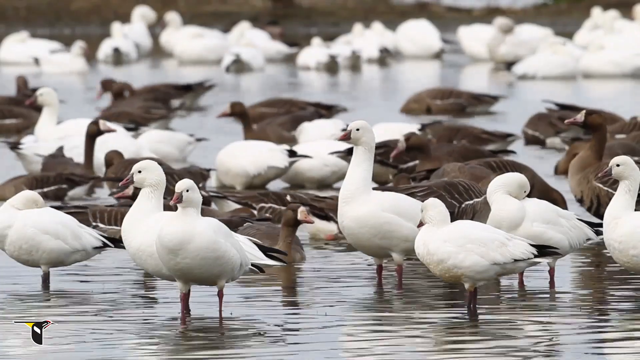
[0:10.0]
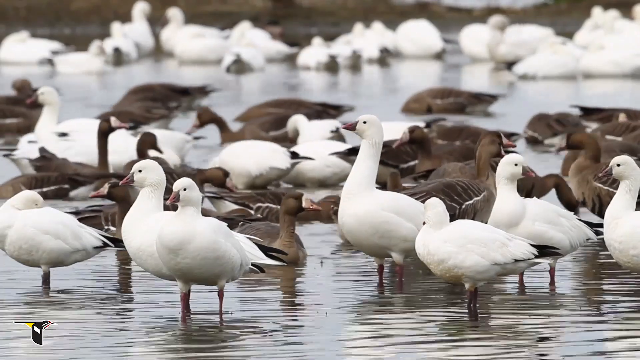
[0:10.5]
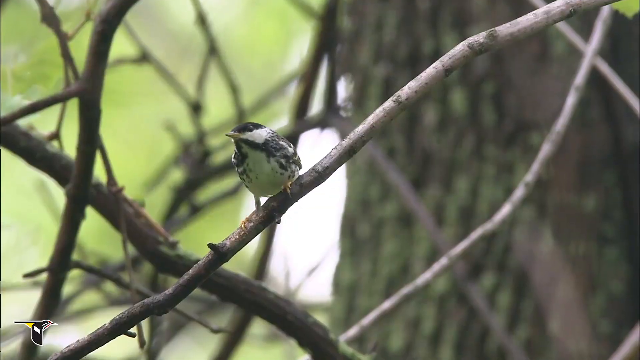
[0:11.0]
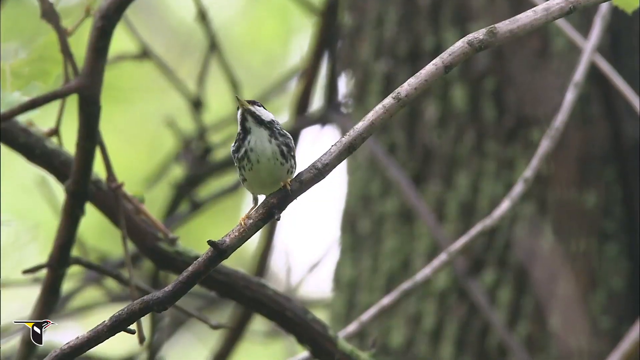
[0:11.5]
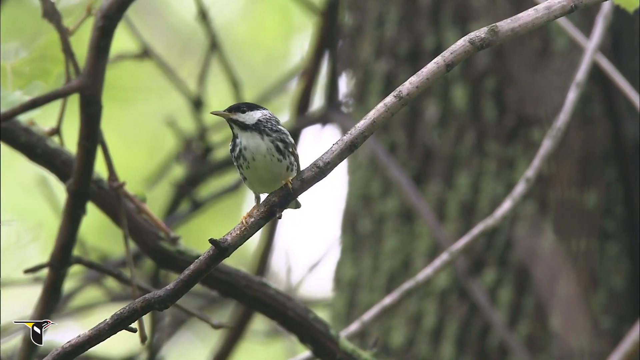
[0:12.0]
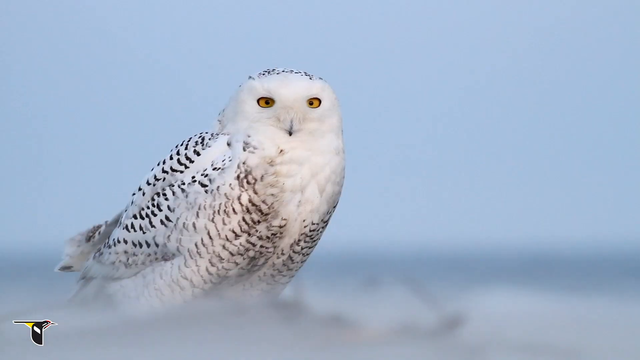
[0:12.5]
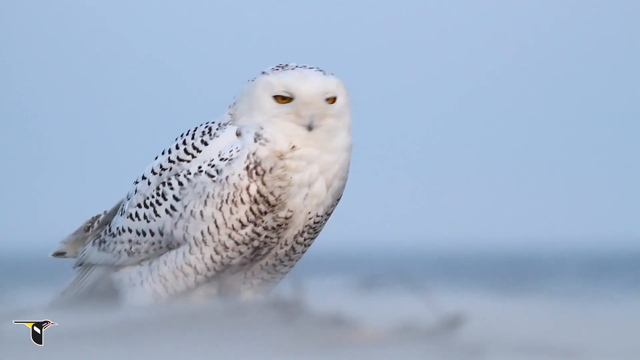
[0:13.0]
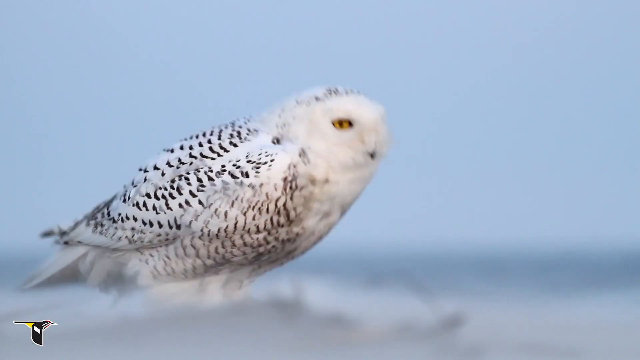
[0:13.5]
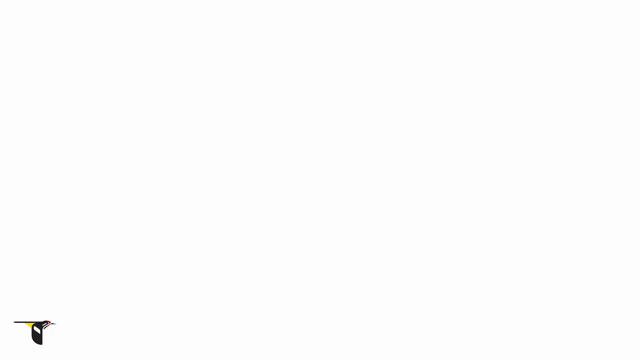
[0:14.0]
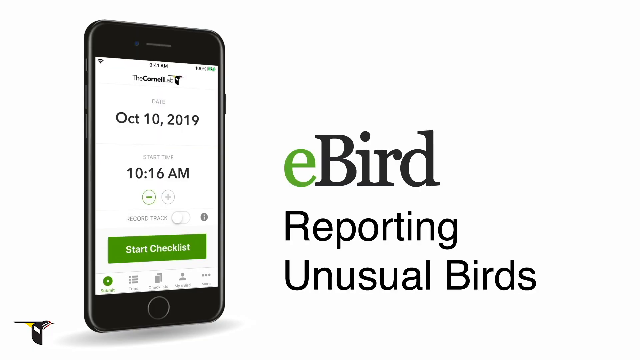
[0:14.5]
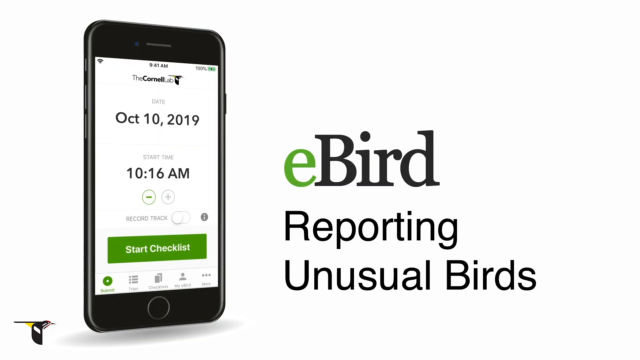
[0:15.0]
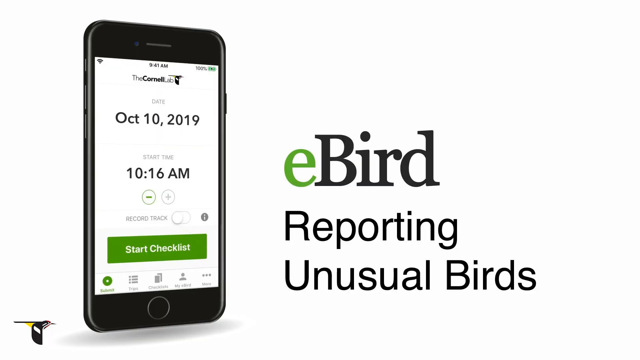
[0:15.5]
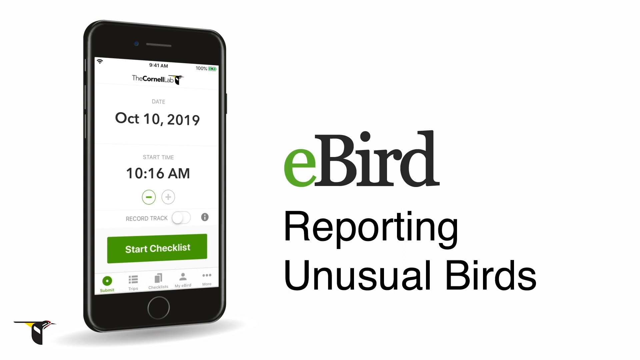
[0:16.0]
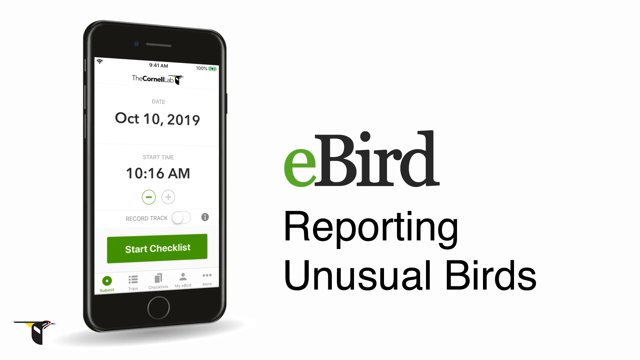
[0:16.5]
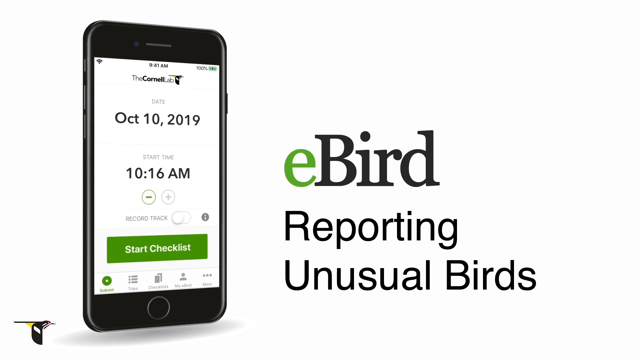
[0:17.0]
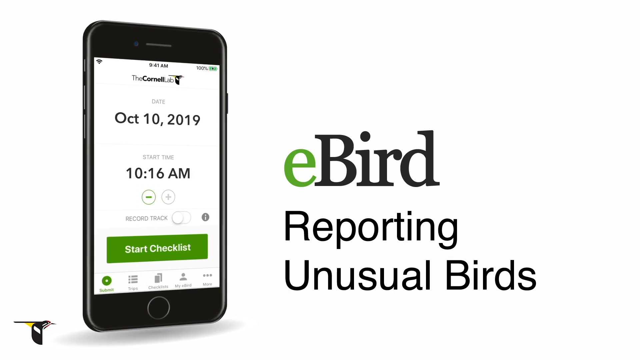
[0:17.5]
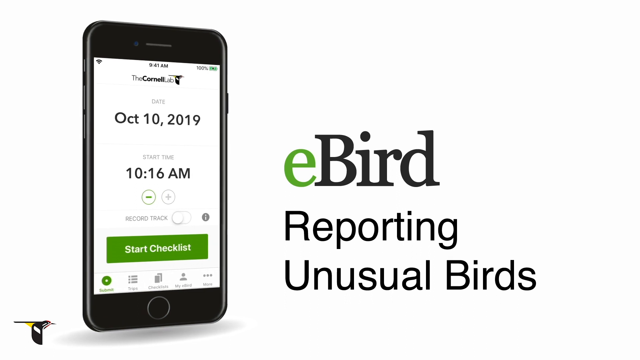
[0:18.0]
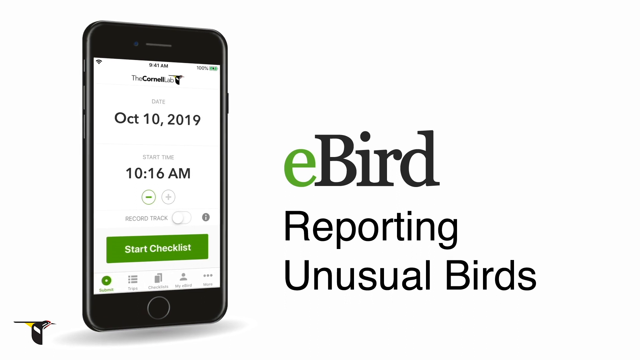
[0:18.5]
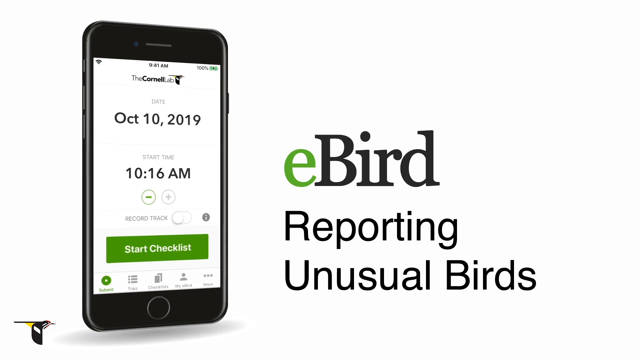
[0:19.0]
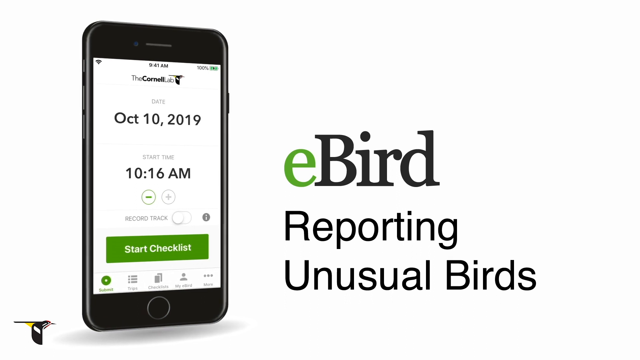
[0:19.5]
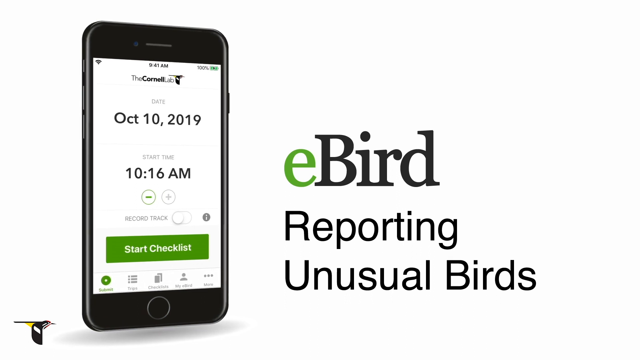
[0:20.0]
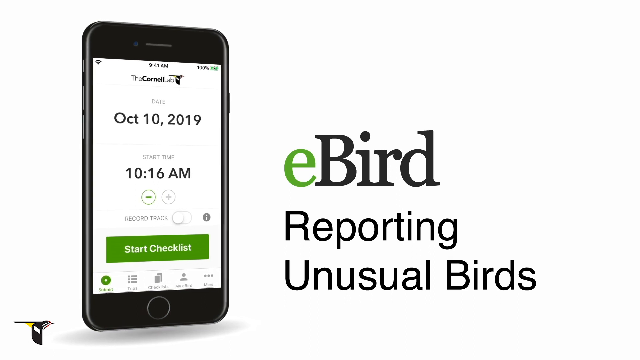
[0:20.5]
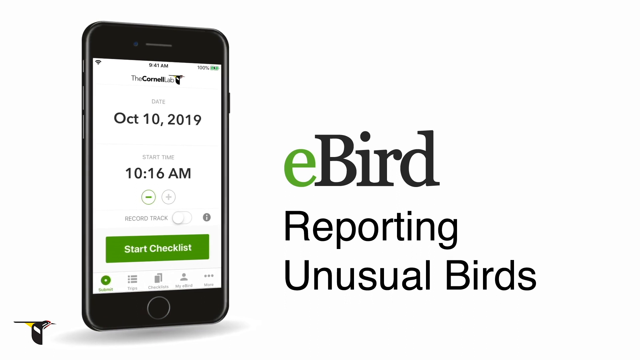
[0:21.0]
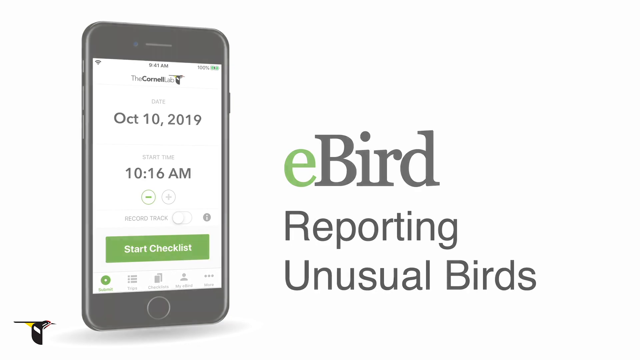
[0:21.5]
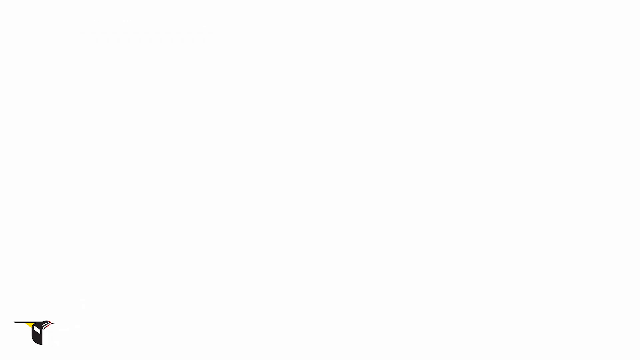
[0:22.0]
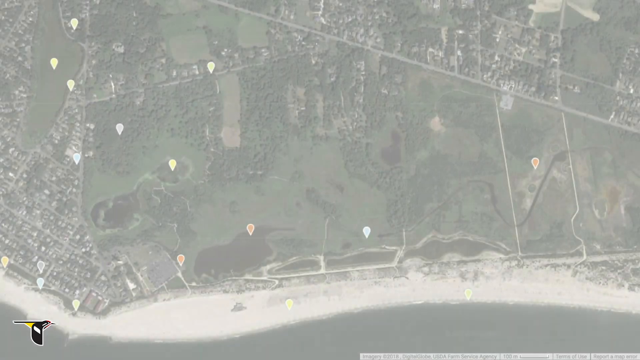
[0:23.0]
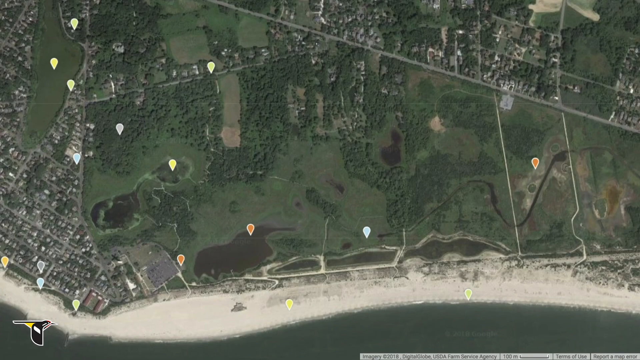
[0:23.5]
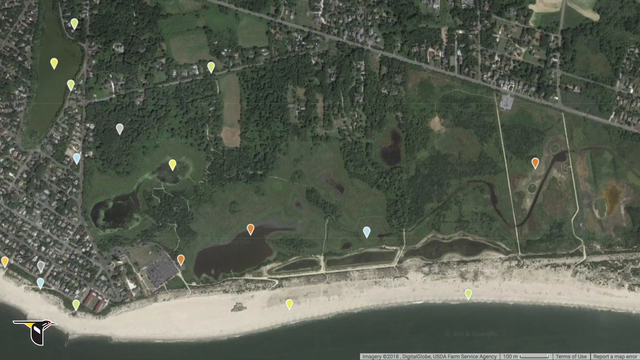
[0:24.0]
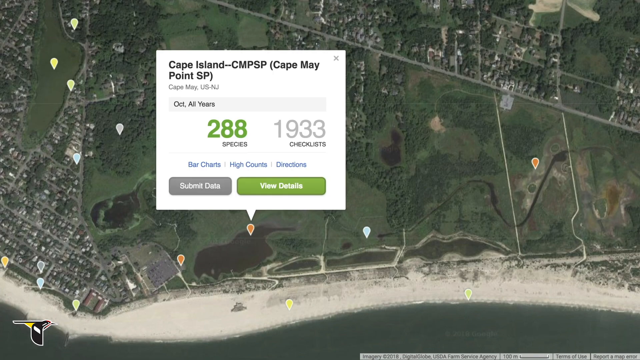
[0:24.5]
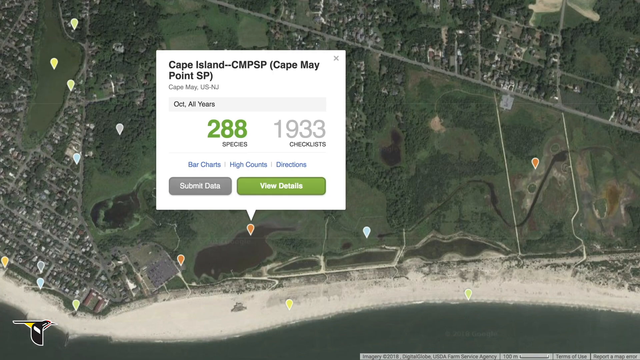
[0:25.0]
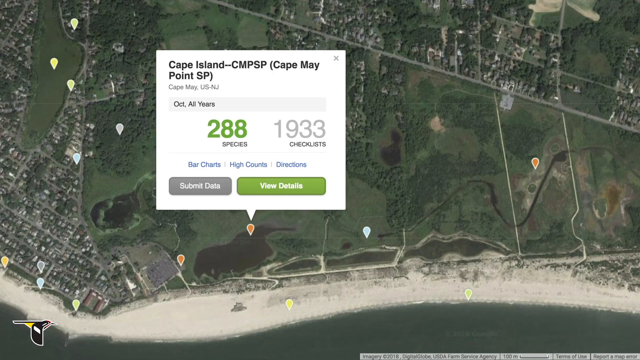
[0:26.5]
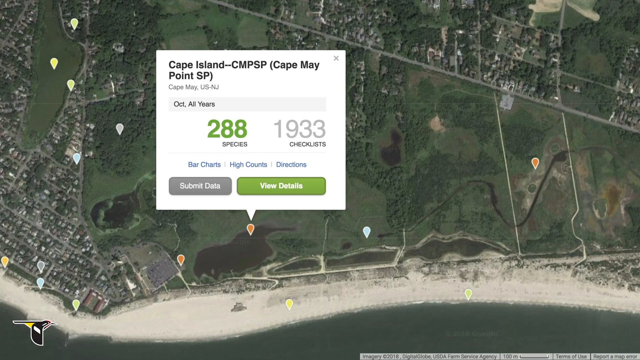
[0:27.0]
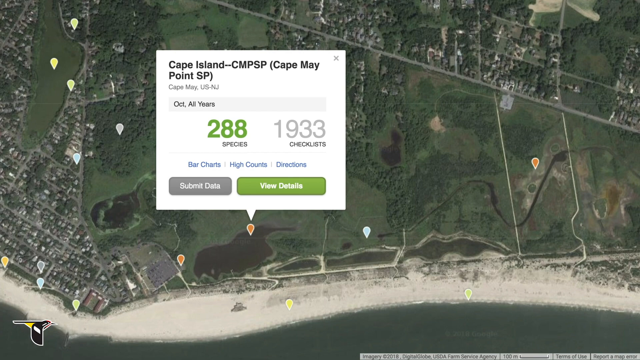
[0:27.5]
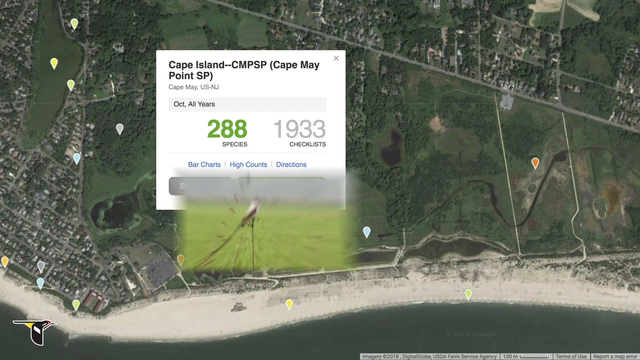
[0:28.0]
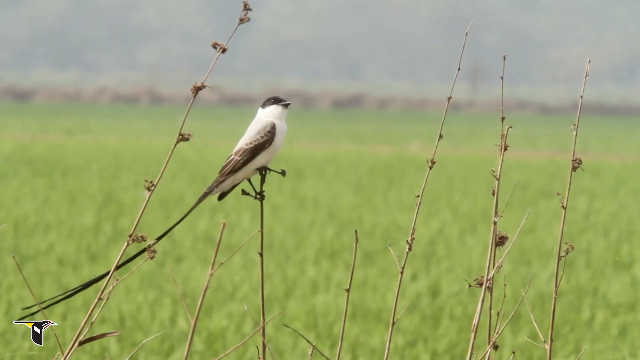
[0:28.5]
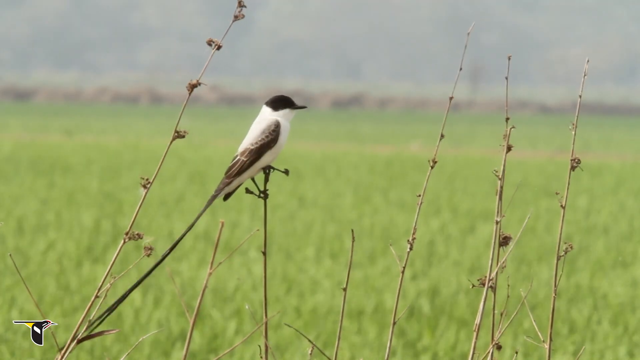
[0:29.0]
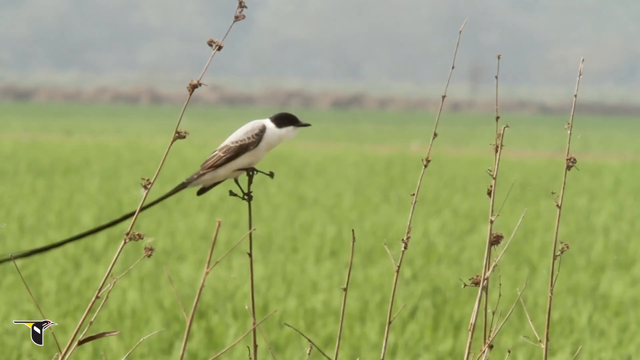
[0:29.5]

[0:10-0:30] Birds of different types appear. First, several dozen white and brown birds that appear to be ducks or geese stand in the water along a waterway. Then a small bird with a white breast and beak and black markings is on a branch in a forested area. Next is an owl, possibly a snowy owl, very white with black markings on its feathers and intense yellow eyes, apparently in a polar scene; it gets up and flies. A screen then advertises an app with the text "eBird reporting unusual birds". It appears to be a mobile app, apparently part of the Cornell lab, and the screen shows a date and time and says "start checklist". An overhead map view follows, indicating species and checklists from a certain area on the map. The video then cuts to a white bird with brown wings, a black head and a very long tail, on a branch or some sort of weed in a field.